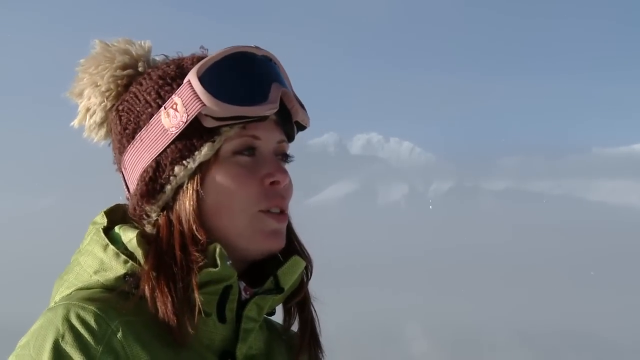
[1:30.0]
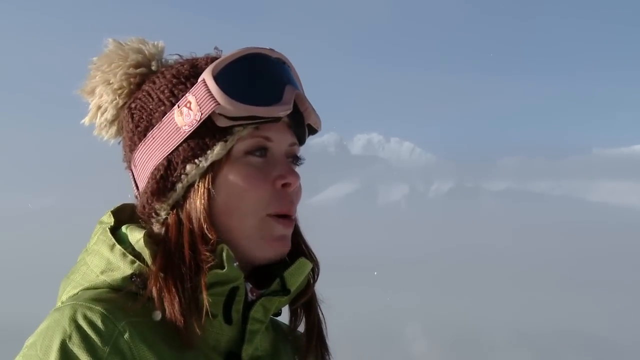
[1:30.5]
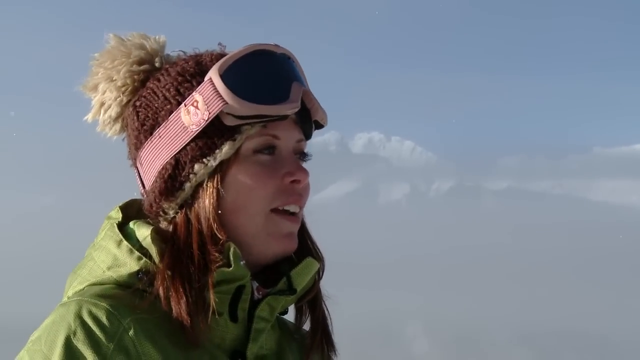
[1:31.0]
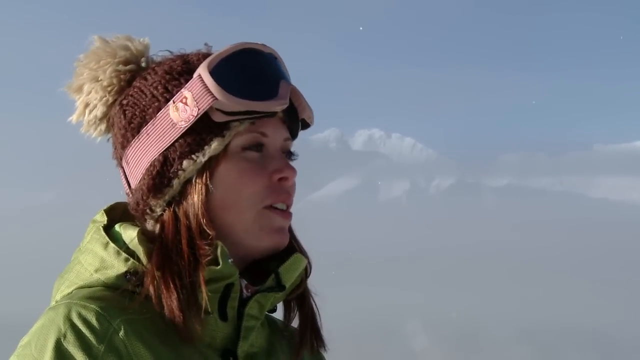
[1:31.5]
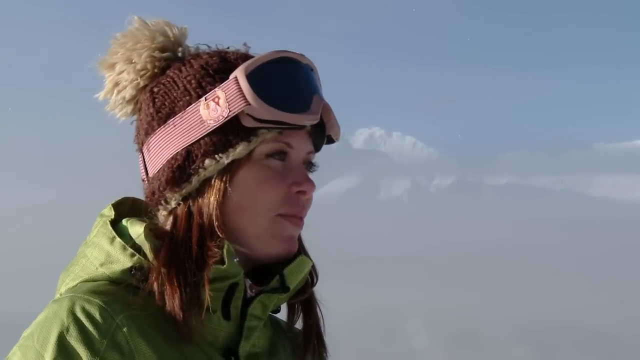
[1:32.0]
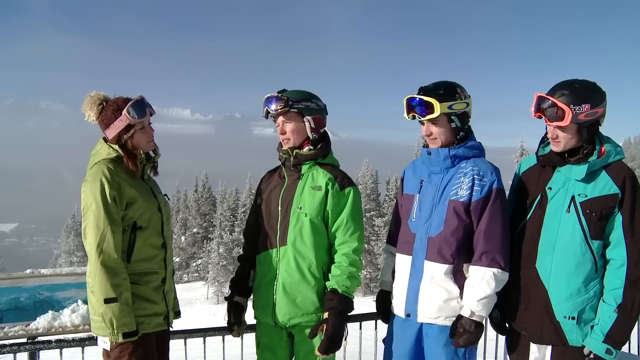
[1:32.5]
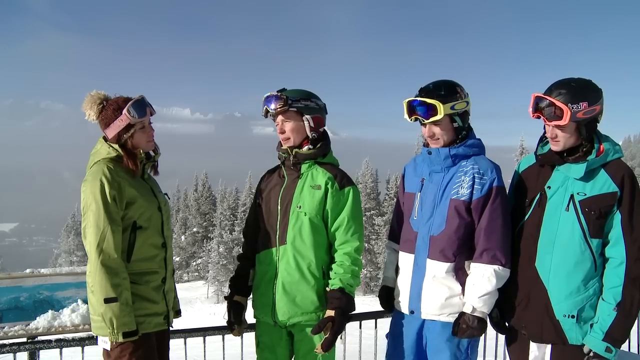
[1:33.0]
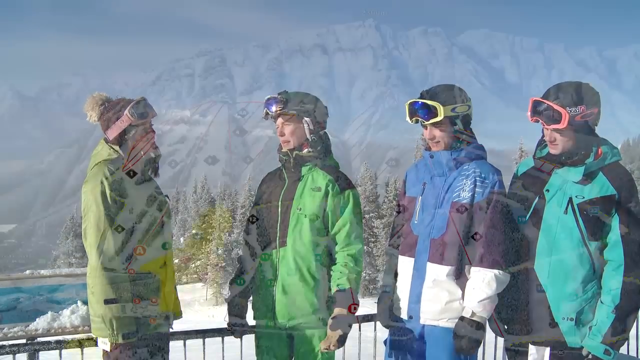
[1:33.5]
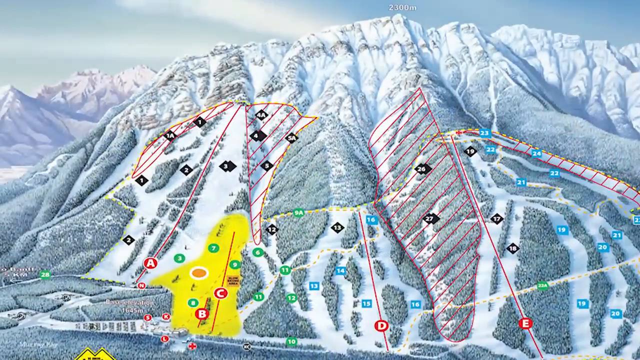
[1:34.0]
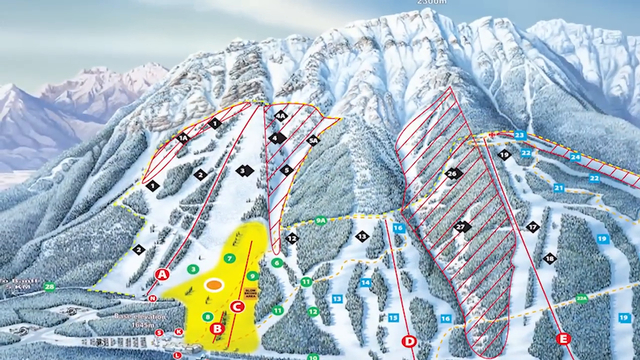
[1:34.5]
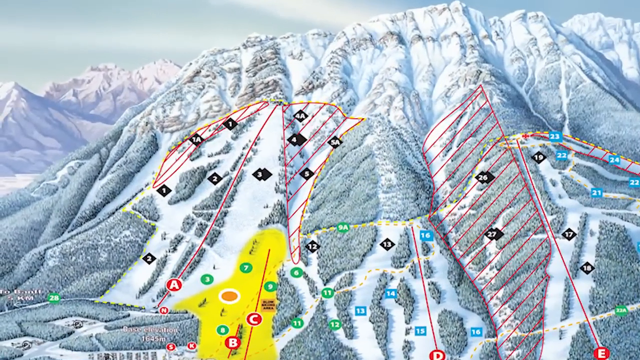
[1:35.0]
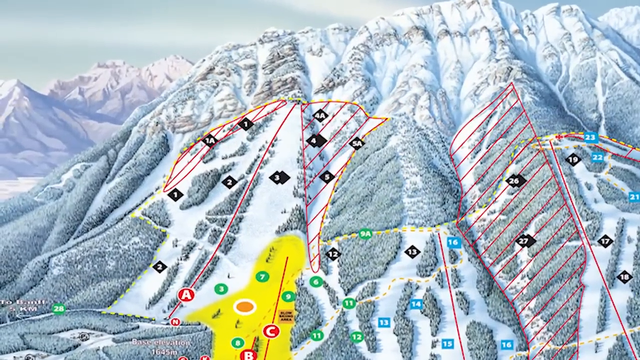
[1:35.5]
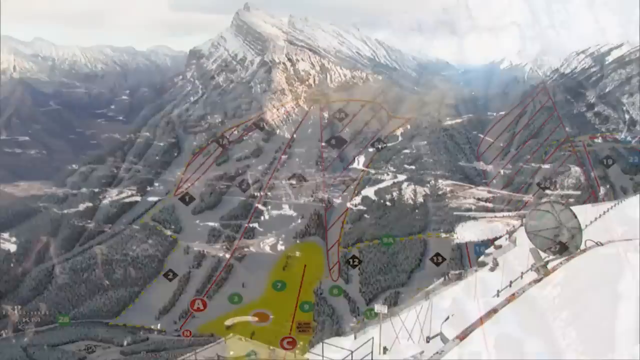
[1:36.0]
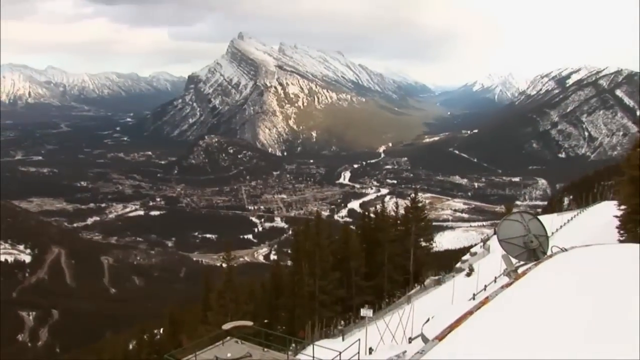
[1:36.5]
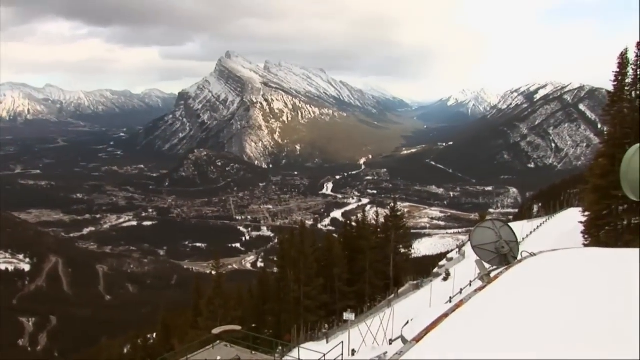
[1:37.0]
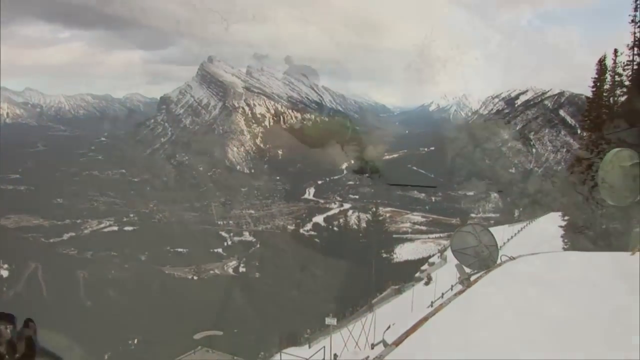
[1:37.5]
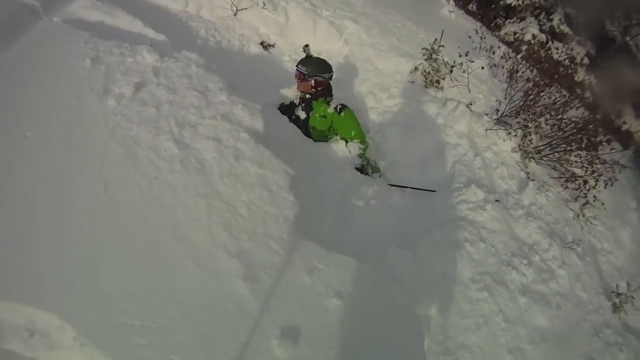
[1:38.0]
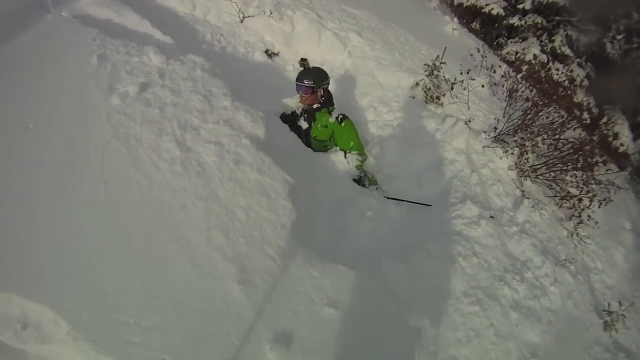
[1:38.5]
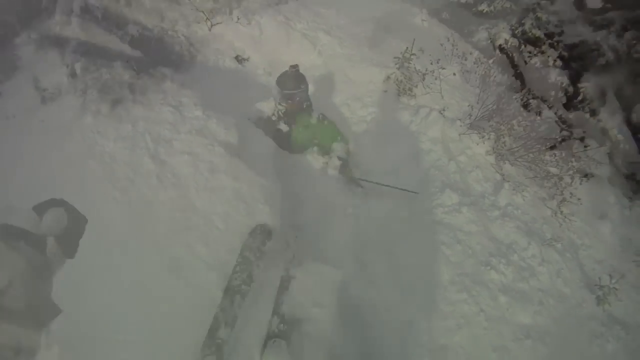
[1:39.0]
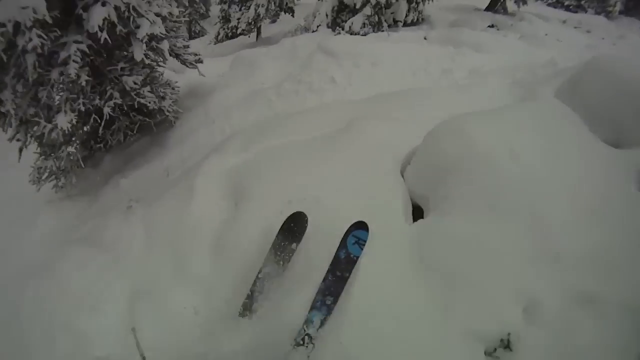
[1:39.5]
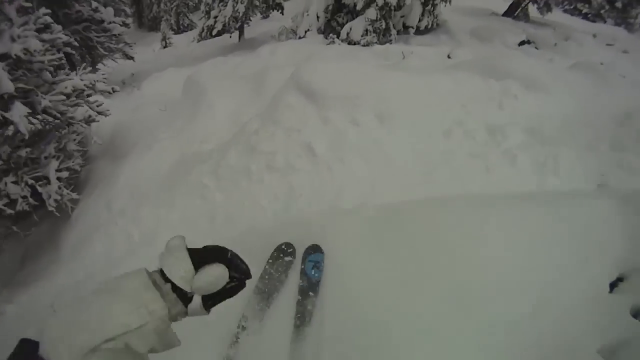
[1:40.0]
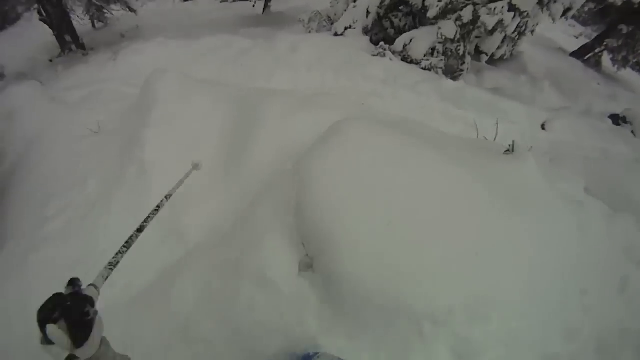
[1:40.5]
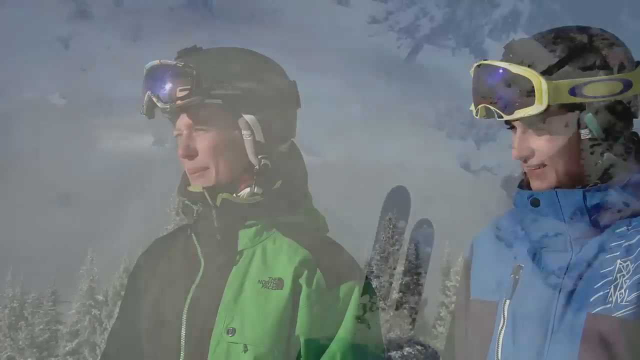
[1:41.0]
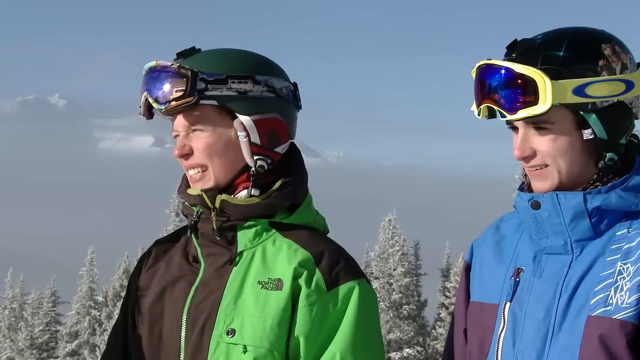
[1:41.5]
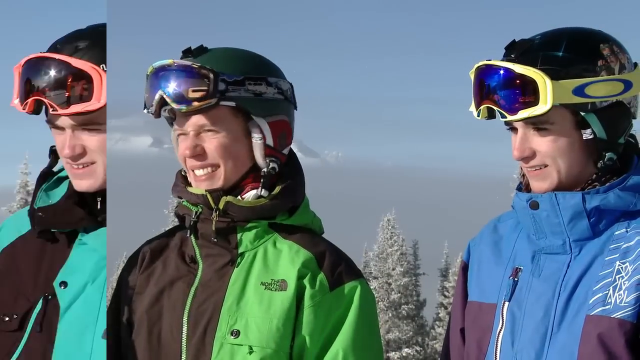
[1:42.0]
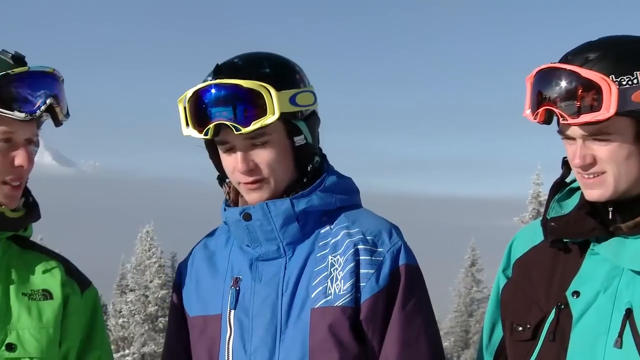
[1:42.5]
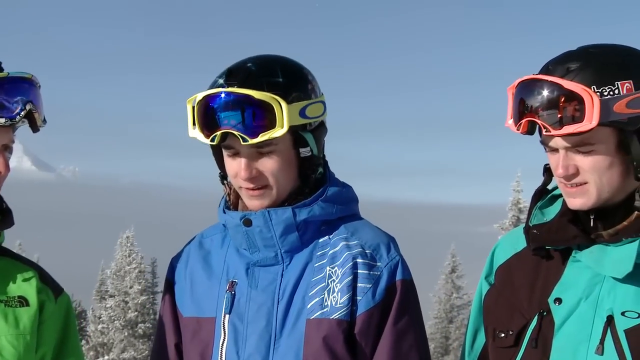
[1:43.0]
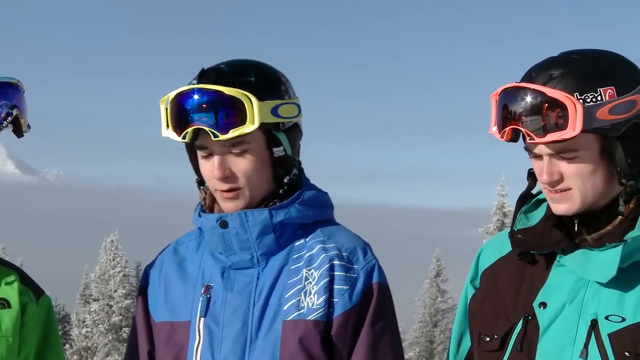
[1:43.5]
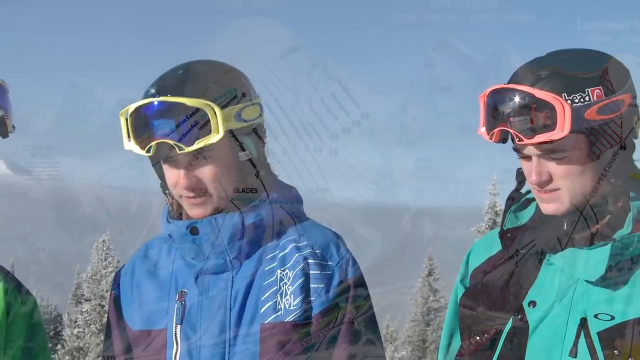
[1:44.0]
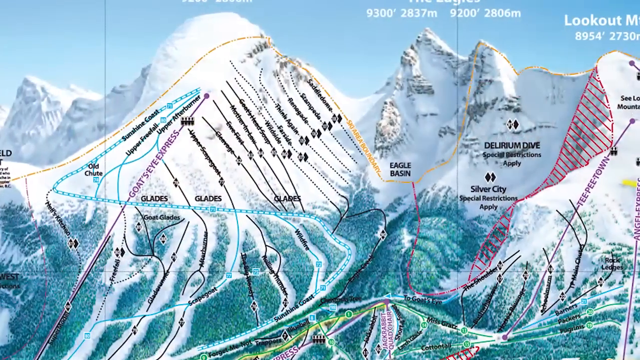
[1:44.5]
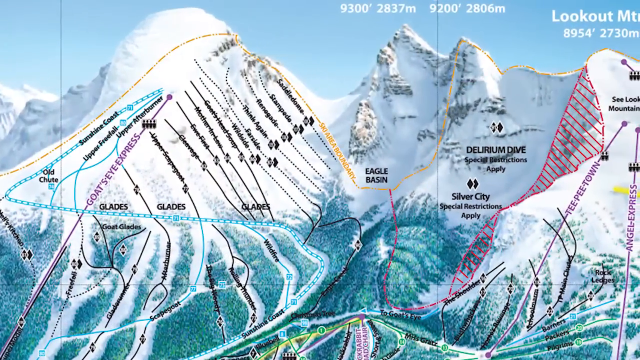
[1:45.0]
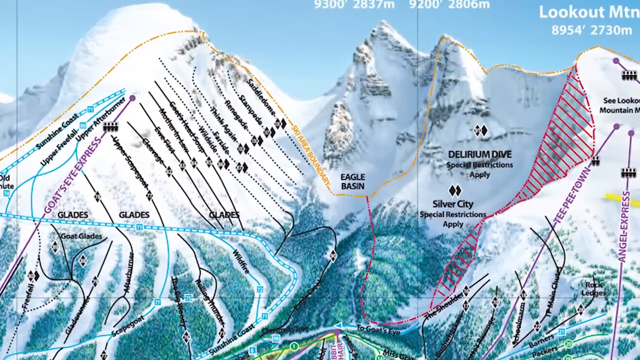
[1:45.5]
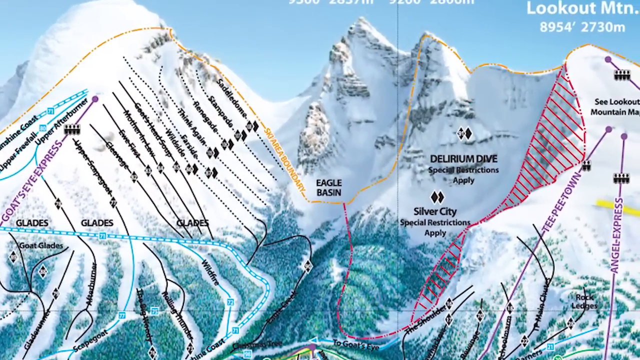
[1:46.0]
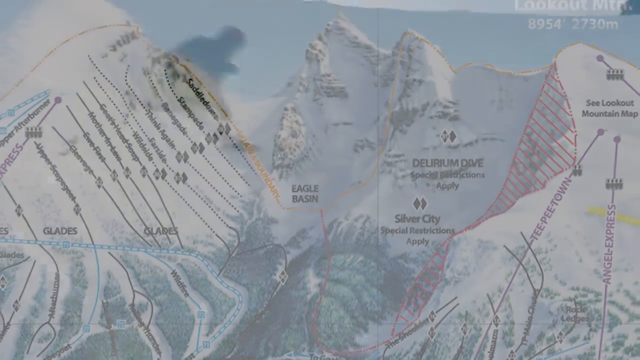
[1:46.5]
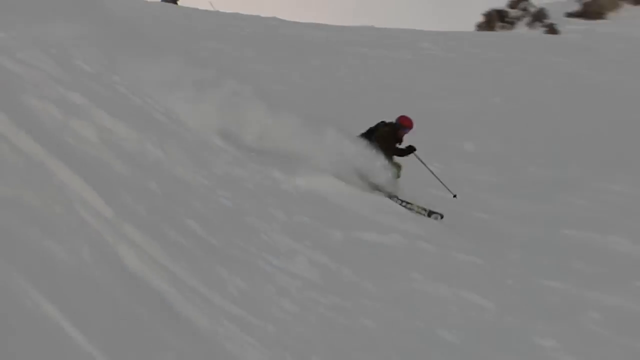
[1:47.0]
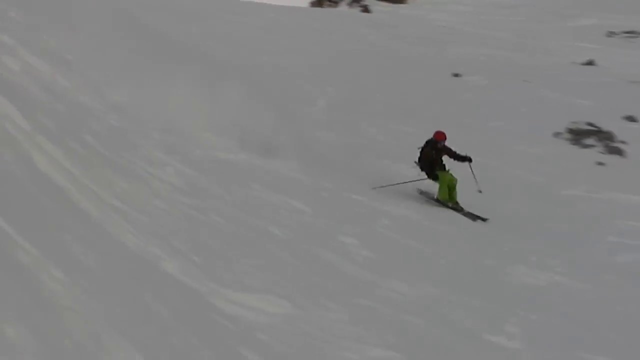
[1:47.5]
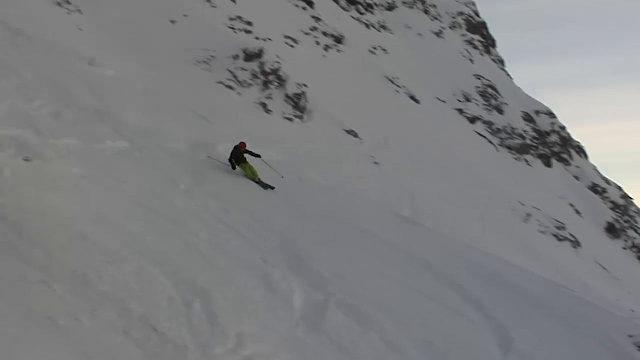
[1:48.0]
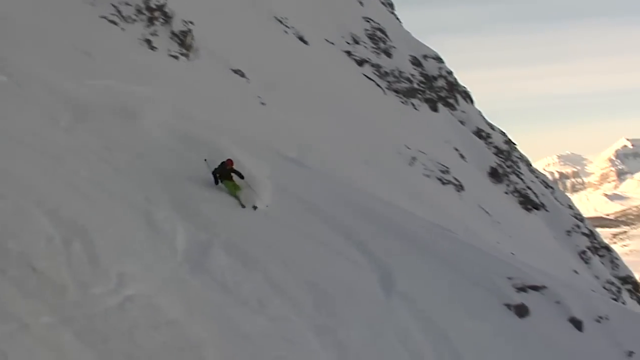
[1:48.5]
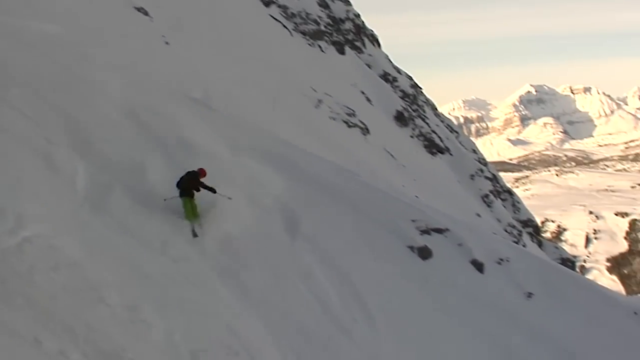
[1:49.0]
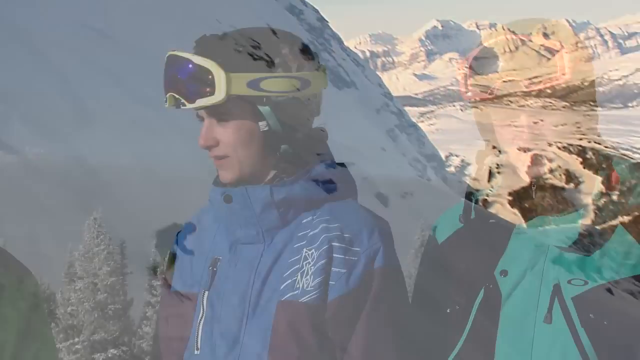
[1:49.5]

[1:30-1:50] The woman in the lime green jacket, here with purple ski goggles, is on the left-hand side looking to the right and speaking. A wide shot shows her and the three boys standing there, the boys kind of looking at her with the sun reflecting in their eyes. The video transitions to a mountain range background with a drawn map of different ski runs, zooming in on the right-hand side. It then cuts to what is apparently real footage in which something seems to have happened to one of the kids, maybe an avalanche. The video cuts back to them talking, then to another shot of them skiing down what looks like an open ski area.